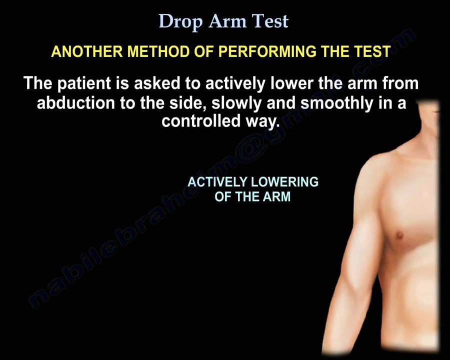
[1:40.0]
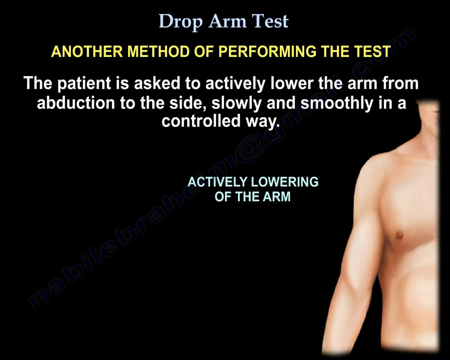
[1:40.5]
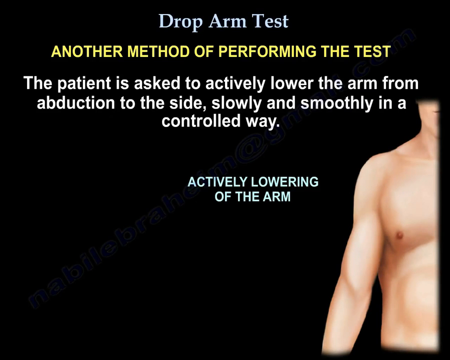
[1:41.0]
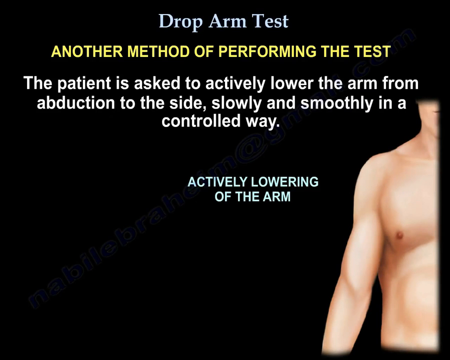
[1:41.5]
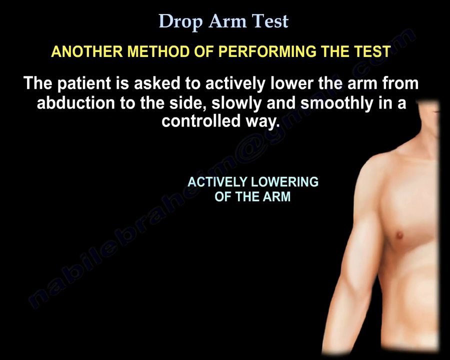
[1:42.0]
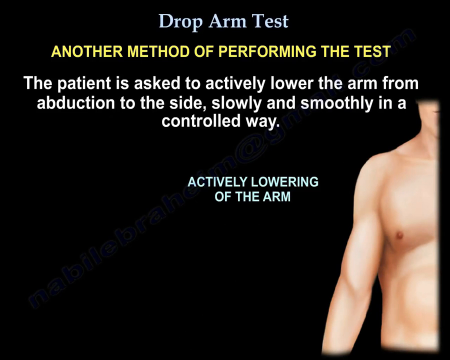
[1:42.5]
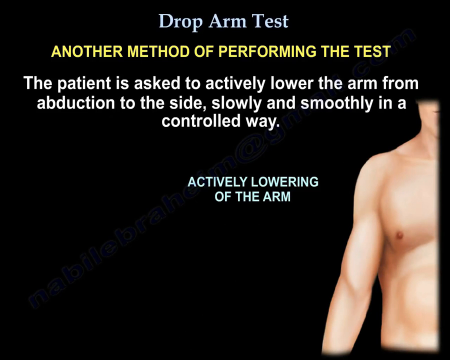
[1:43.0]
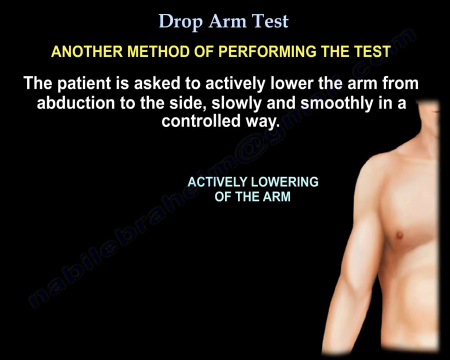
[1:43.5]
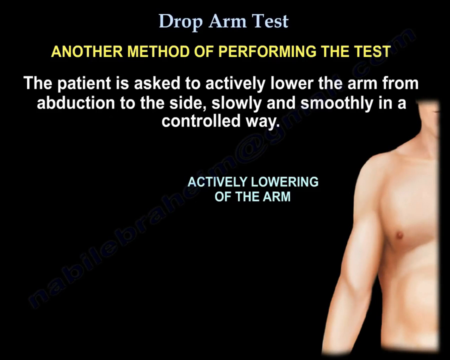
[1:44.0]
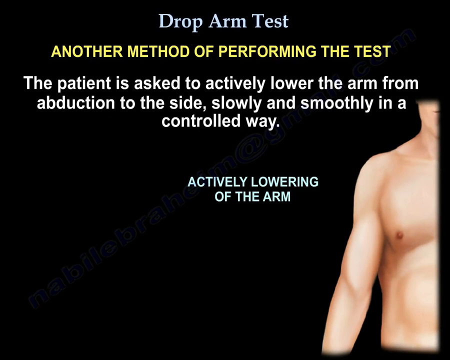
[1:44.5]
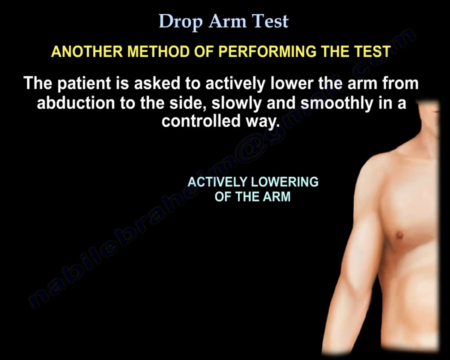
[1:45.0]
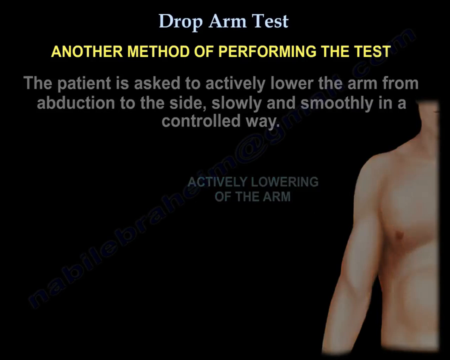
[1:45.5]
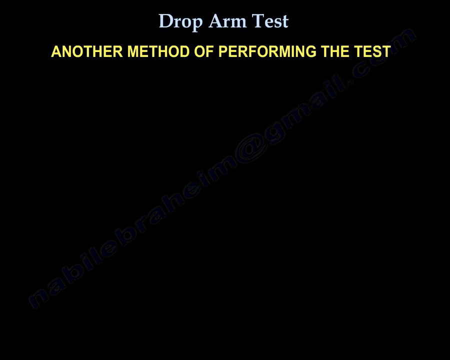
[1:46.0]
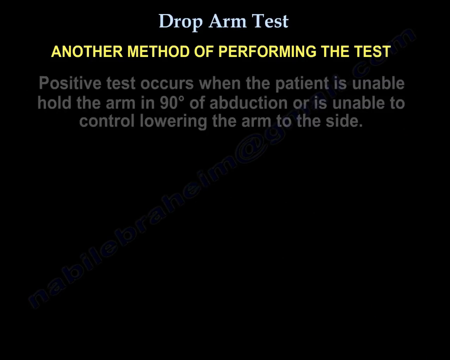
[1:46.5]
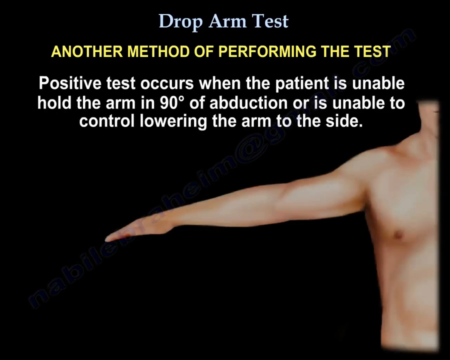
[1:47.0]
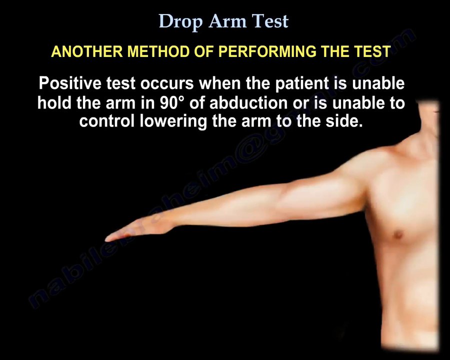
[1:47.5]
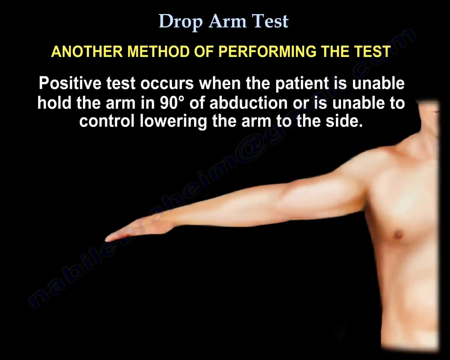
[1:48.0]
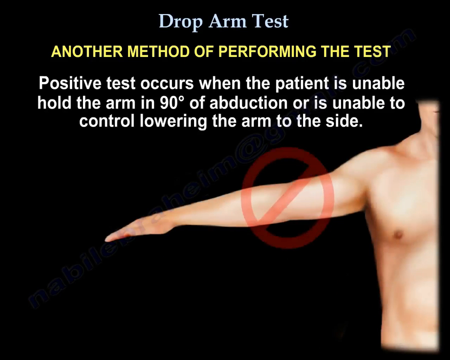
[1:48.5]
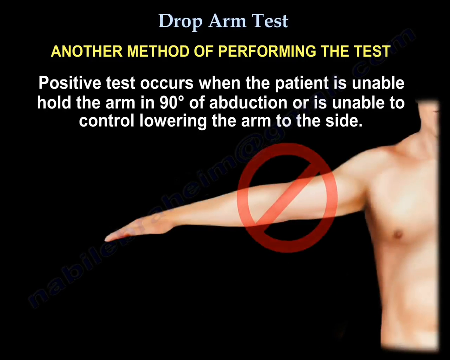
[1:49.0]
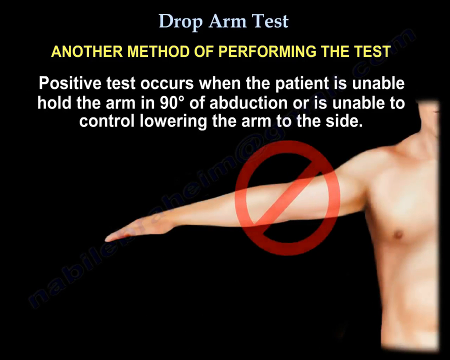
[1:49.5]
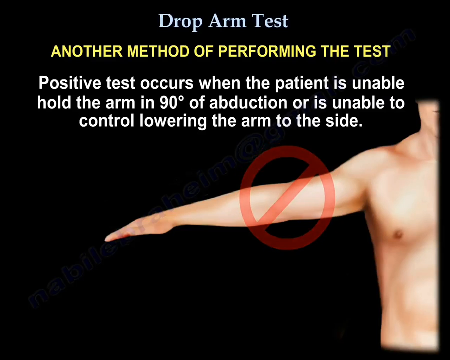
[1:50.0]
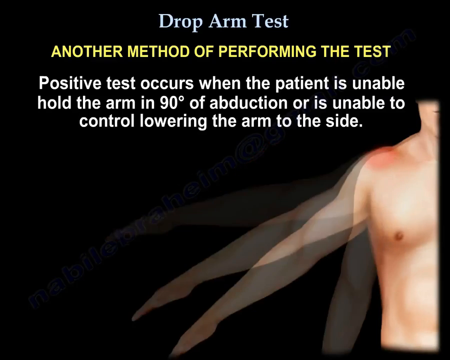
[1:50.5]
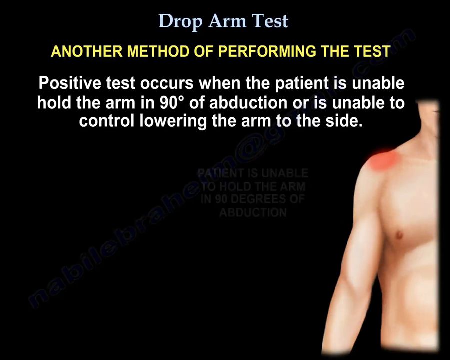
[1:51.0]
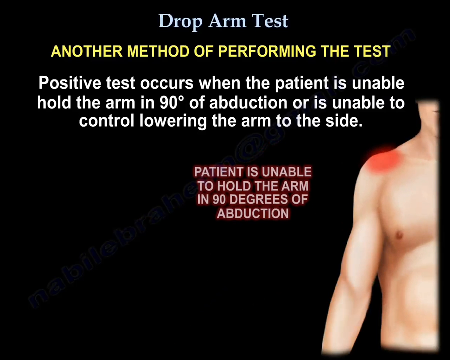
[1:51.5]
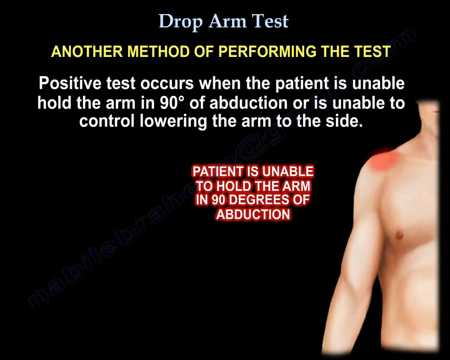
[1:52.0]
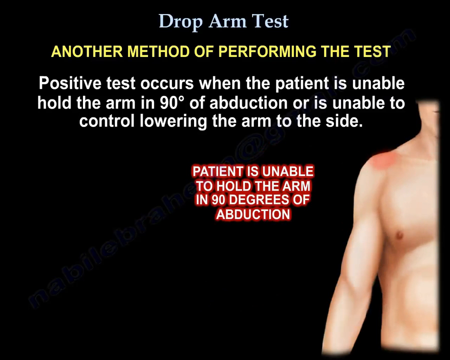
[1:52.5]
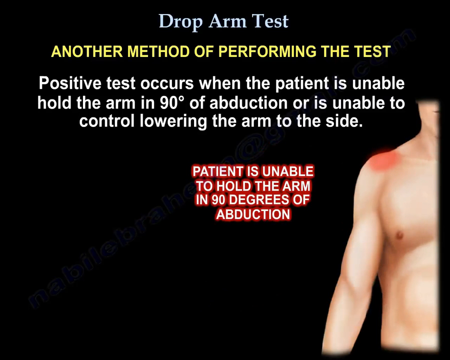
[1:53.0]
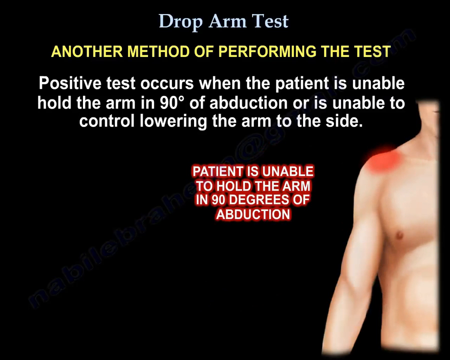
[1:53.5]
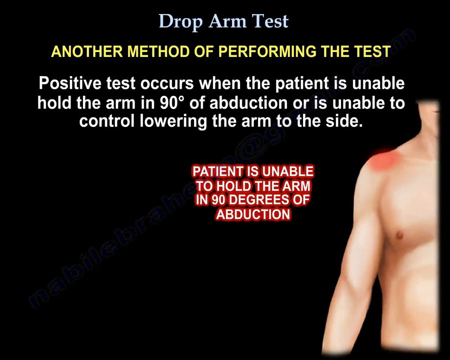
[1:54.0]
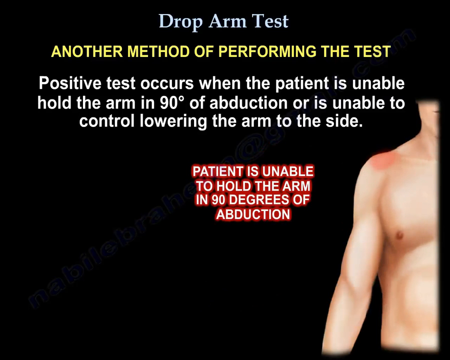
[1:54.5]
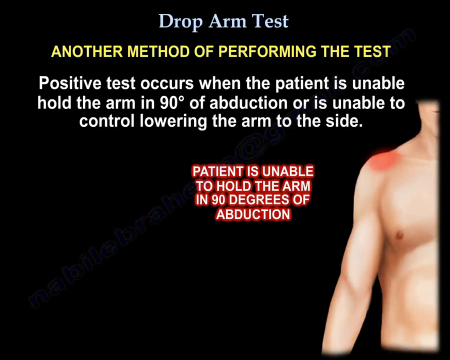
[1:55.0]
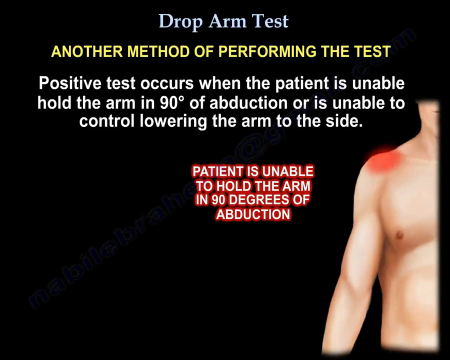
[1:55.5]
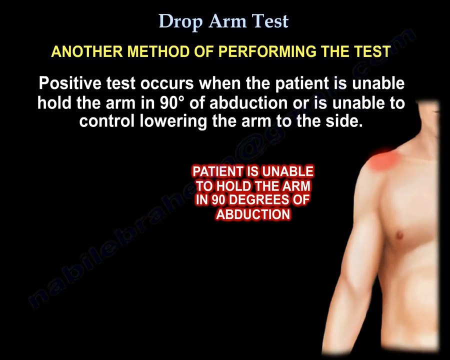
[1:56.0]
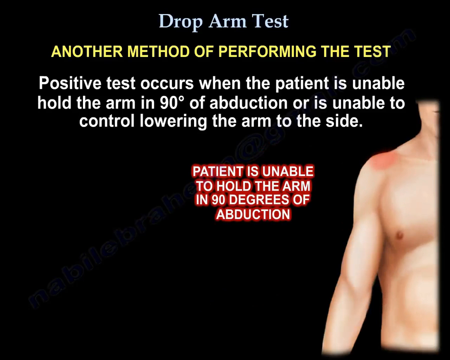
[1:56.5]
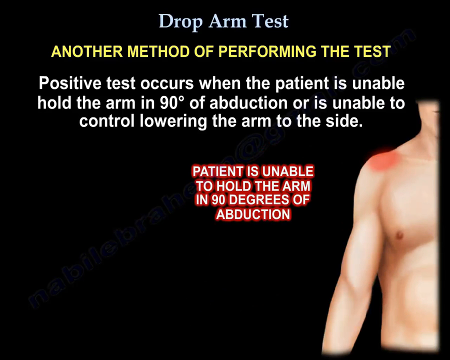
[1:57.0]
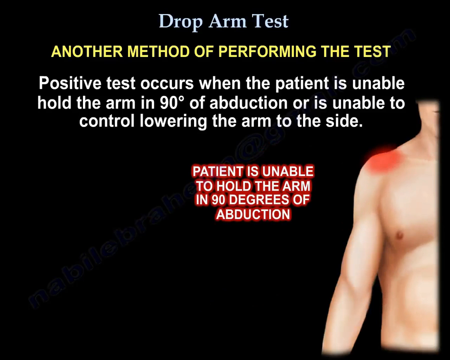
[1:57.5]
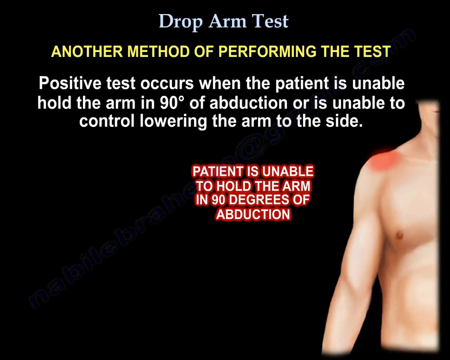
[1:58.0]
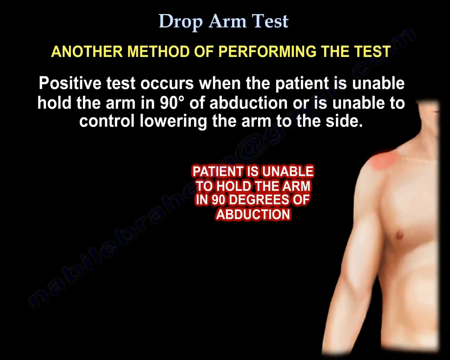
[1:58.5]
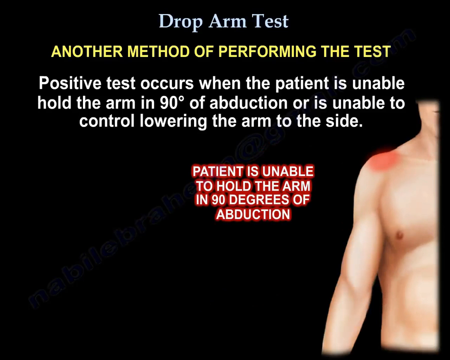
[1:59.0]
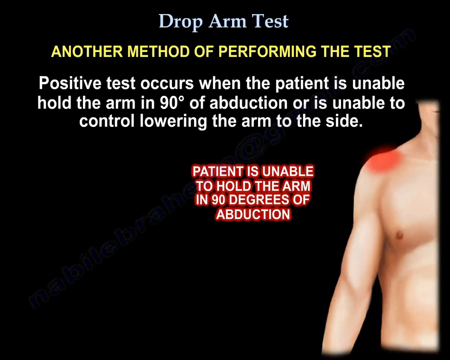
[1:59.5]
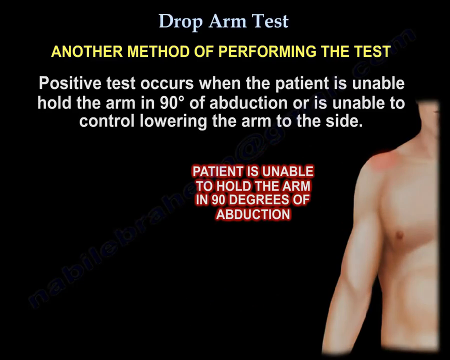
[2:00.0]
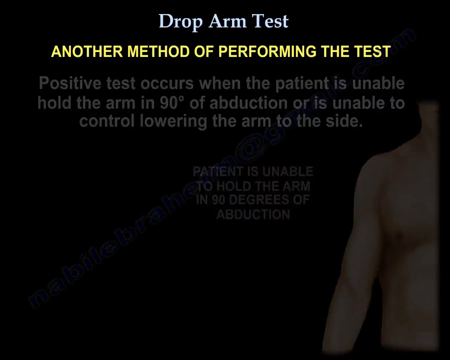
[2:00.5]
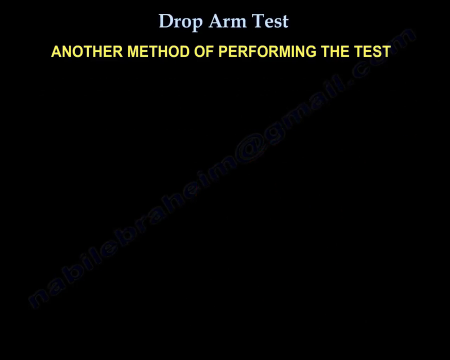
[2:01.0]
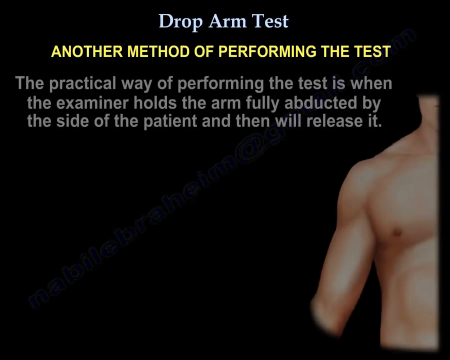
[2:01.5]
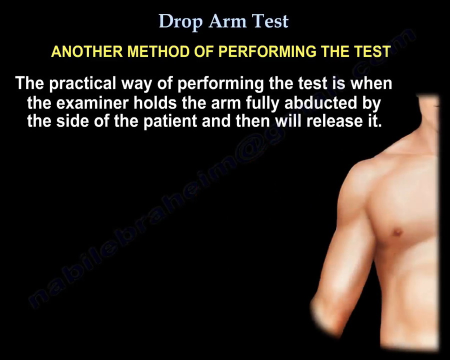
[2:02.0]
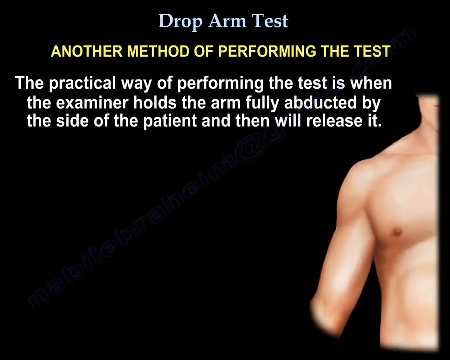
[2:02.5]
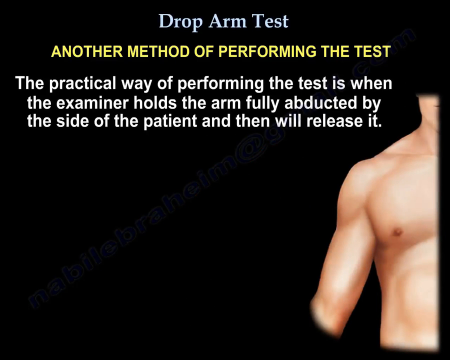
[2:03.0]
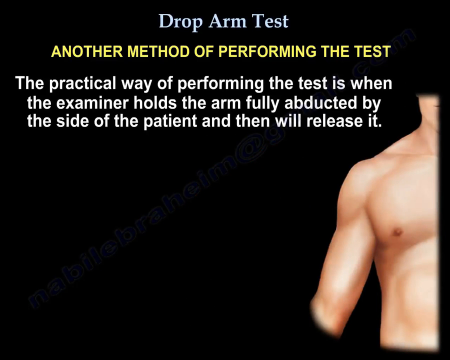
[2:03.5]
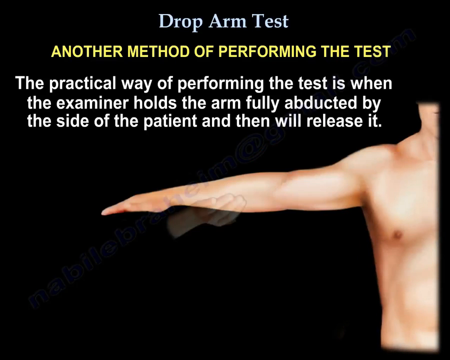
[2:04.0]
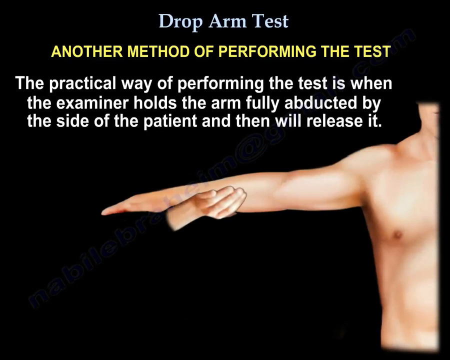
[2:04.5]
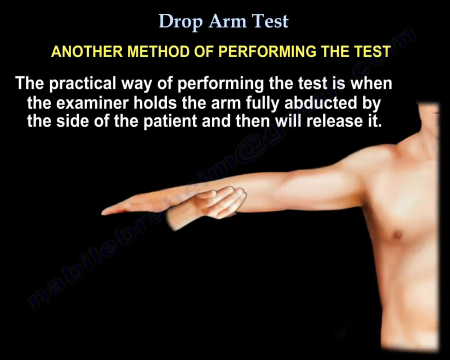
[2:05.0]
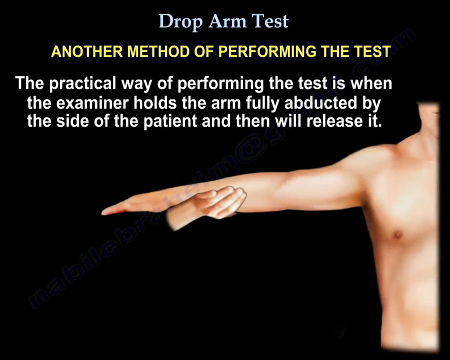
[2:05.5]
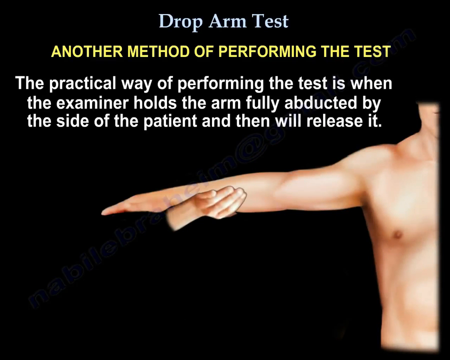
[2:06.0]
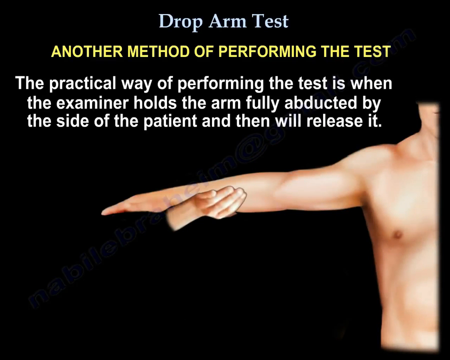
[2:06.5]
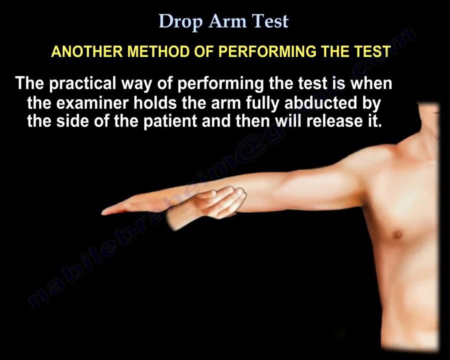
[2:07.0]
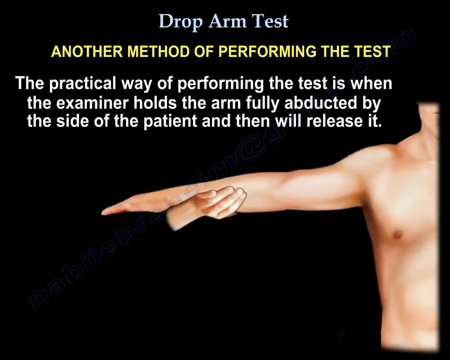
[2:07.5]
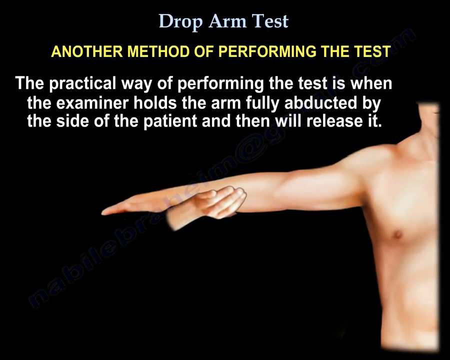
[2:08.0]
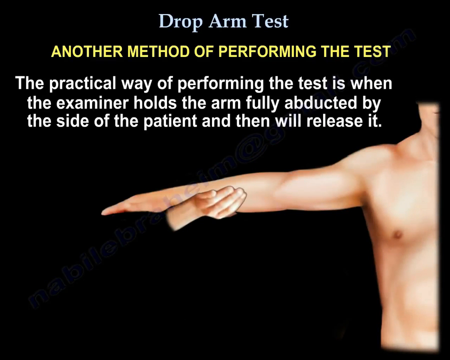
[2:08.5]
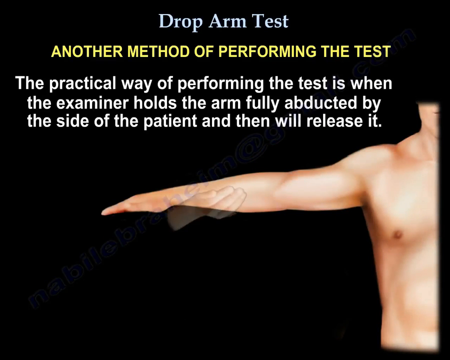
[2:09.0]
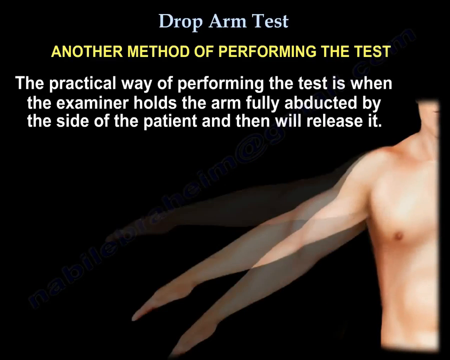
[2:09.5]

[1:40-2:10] The animation continues with this method of the drop arm test, showing the patient actively lowering the arm from abduction to the side. It shows that a positive test occurs when the patient is unable to hold the arm at 90 degrees of abduction or unable to control the lowering of the arm to the side, and a round circle with a line through it appears right at the arm as the patient fails to hold the arm at 90 degrees, indicating a positive test for a tear. Another, practical method is then introduced, in which the examiner holds the arm fully abducted by the patient's side and then releases it to see whether the person can hold the arm up.